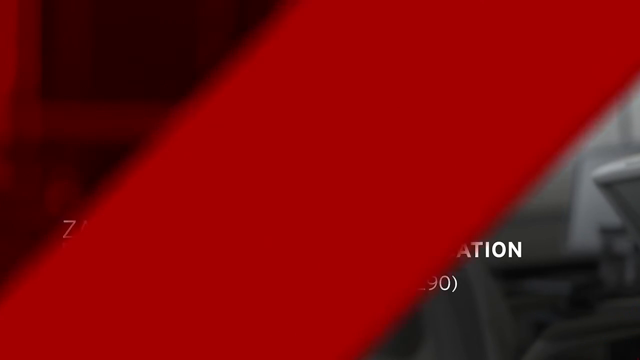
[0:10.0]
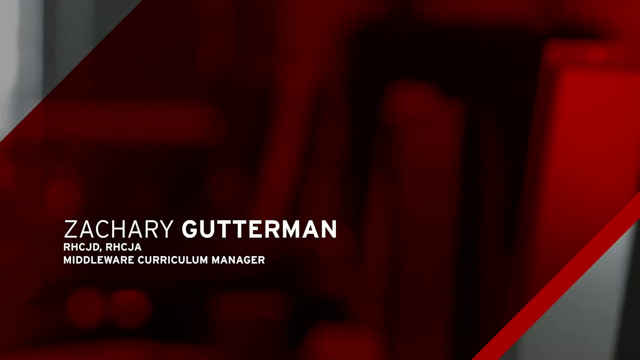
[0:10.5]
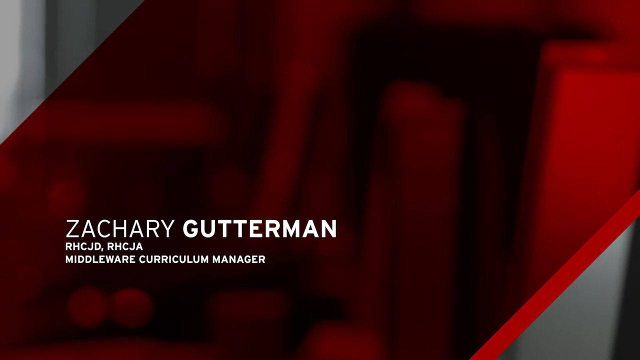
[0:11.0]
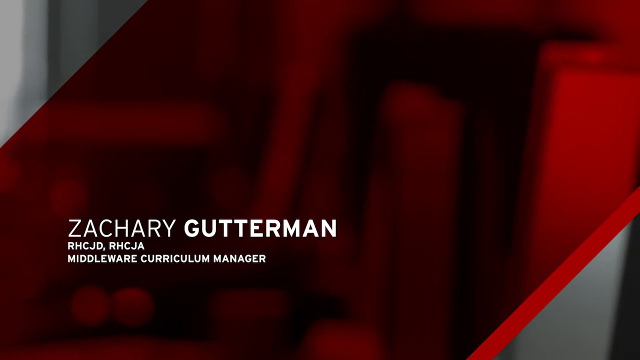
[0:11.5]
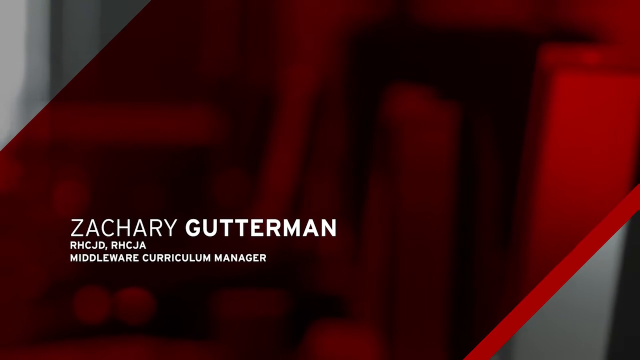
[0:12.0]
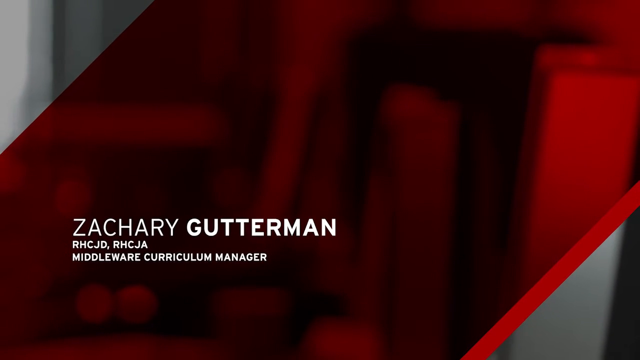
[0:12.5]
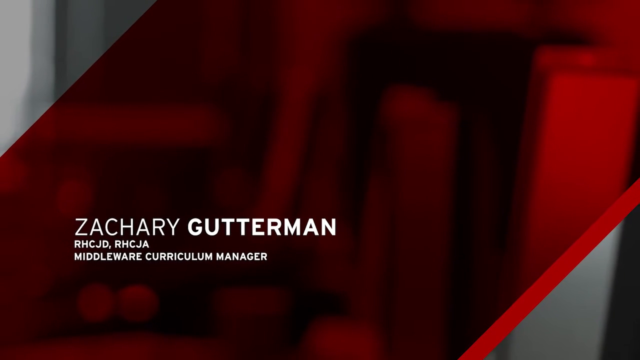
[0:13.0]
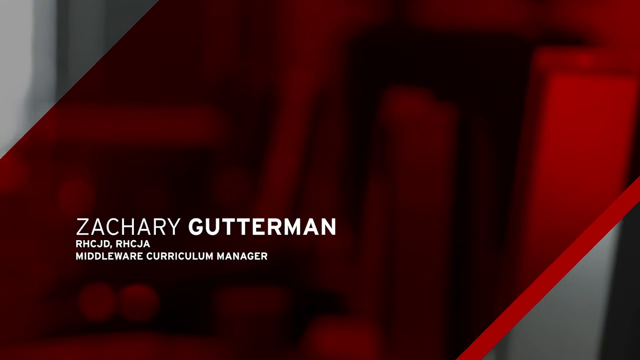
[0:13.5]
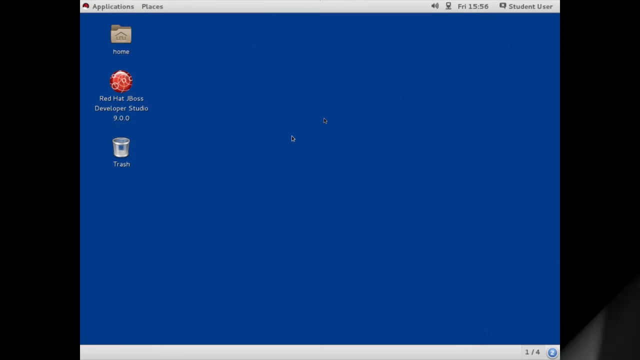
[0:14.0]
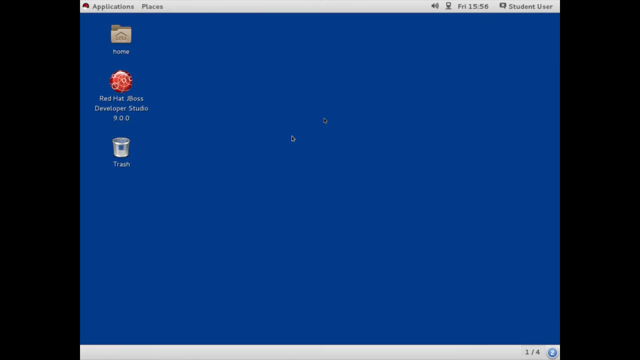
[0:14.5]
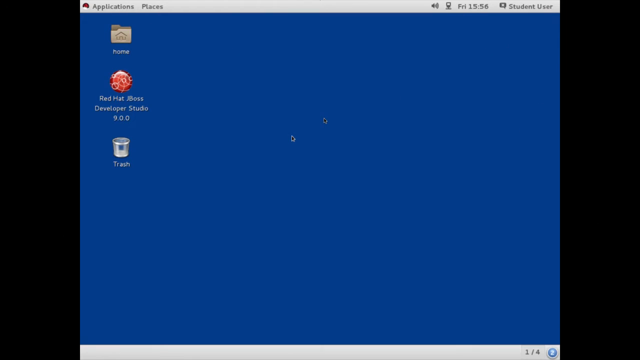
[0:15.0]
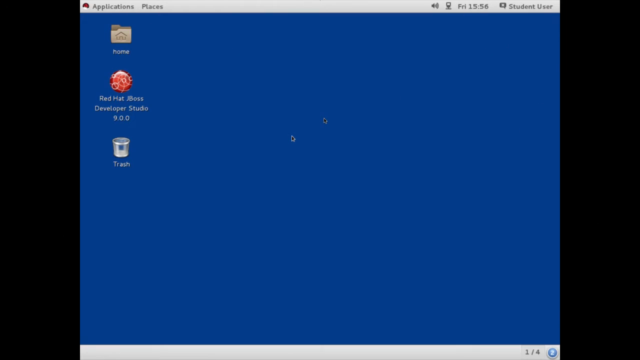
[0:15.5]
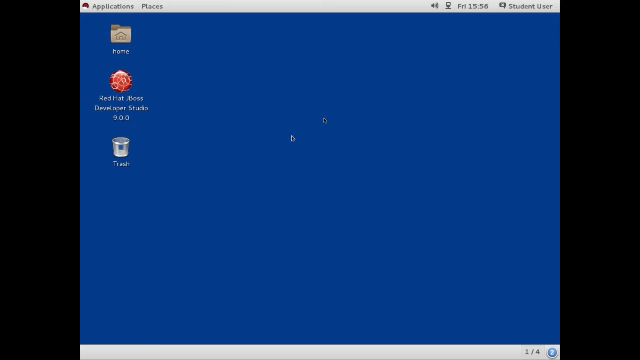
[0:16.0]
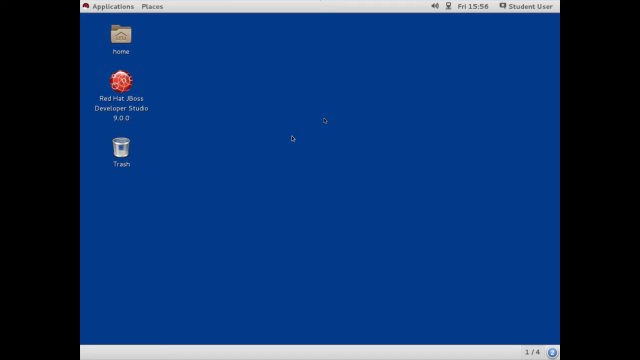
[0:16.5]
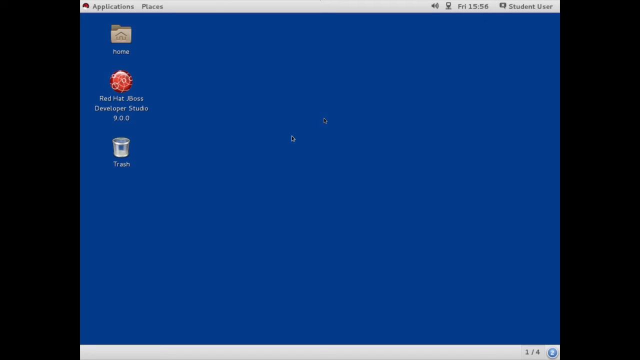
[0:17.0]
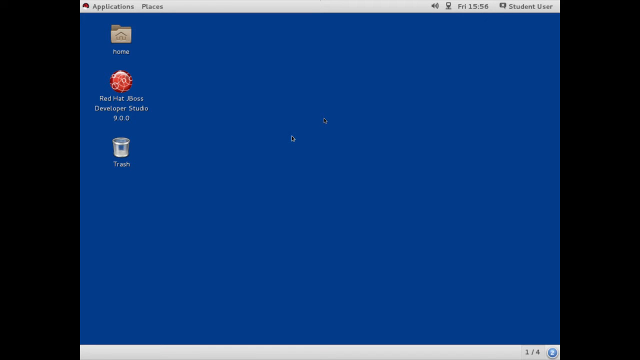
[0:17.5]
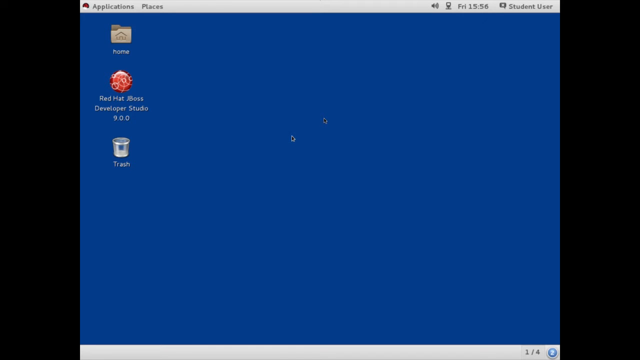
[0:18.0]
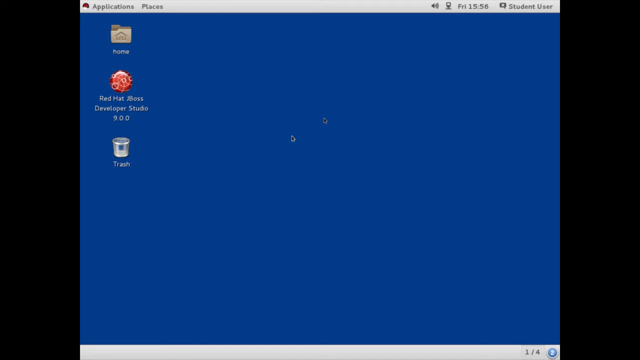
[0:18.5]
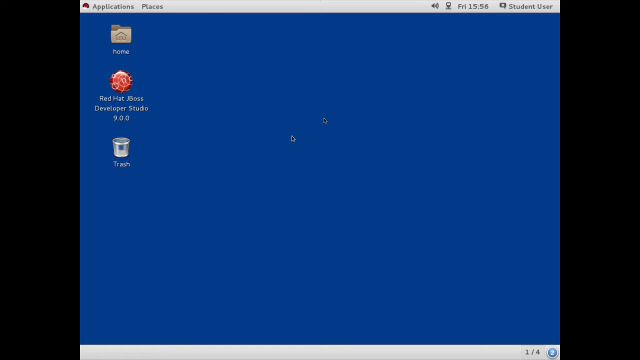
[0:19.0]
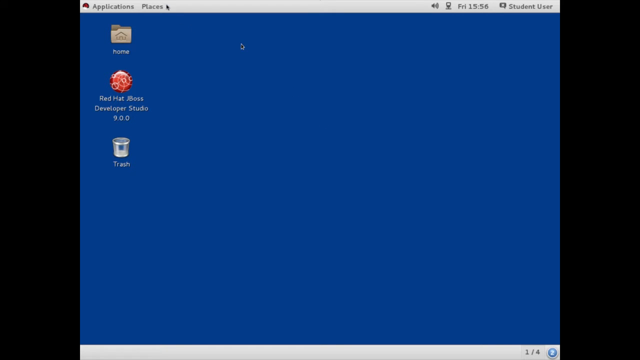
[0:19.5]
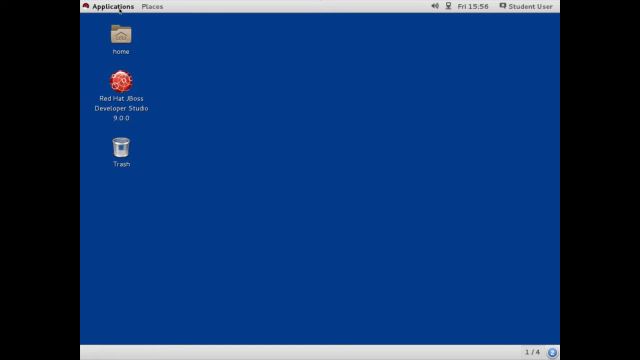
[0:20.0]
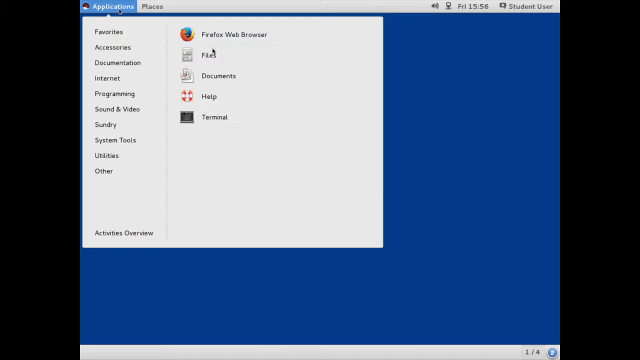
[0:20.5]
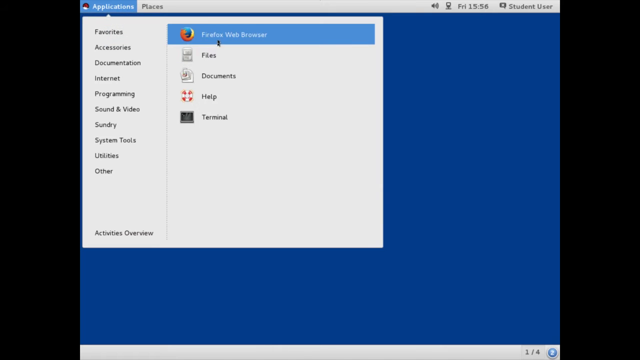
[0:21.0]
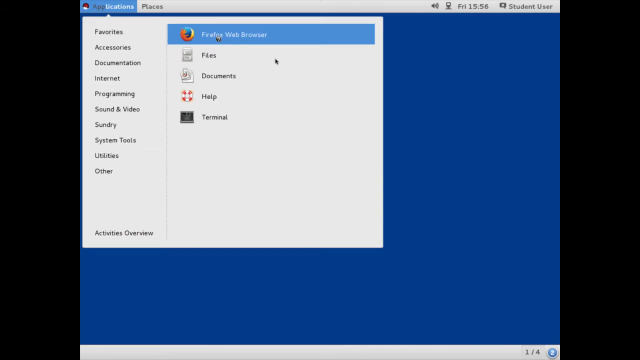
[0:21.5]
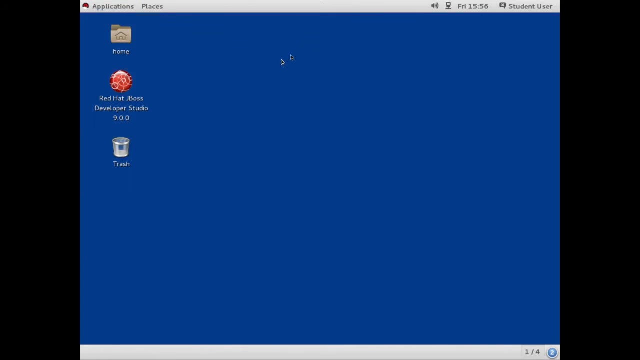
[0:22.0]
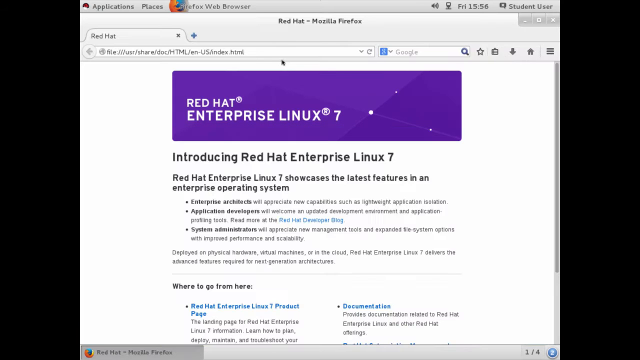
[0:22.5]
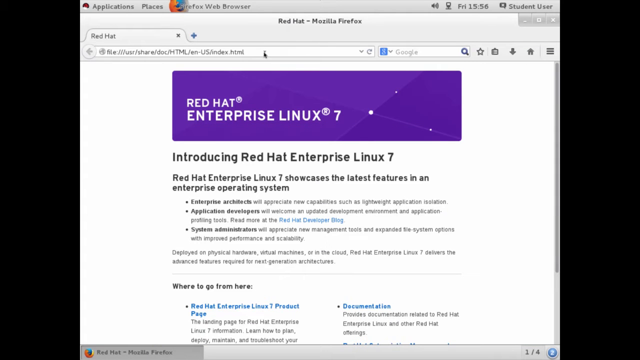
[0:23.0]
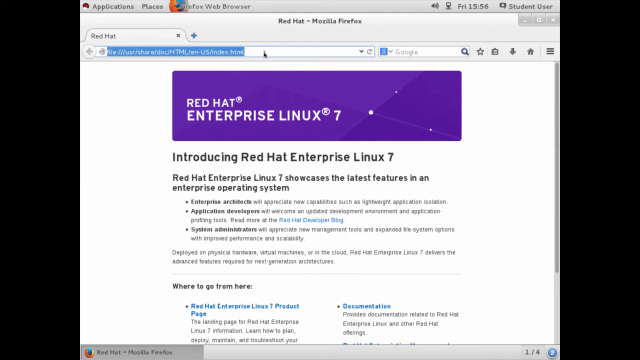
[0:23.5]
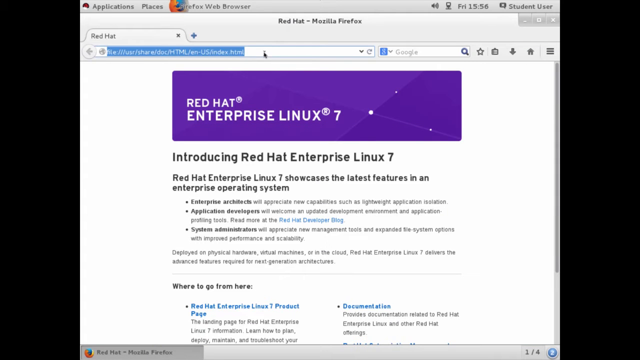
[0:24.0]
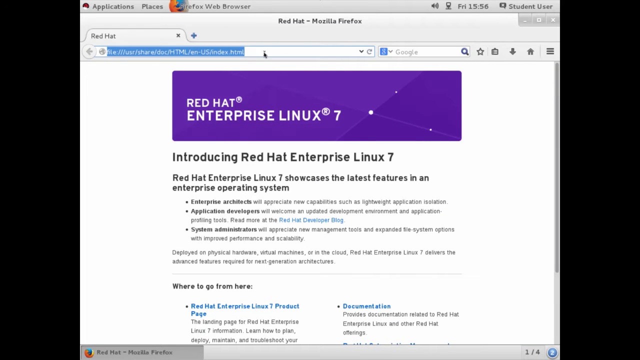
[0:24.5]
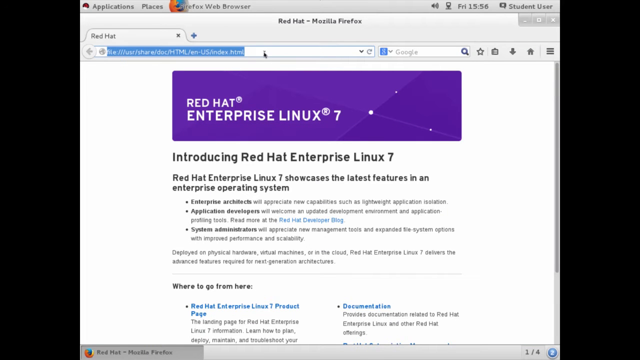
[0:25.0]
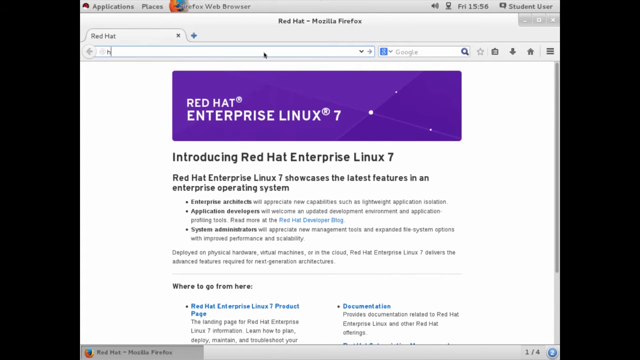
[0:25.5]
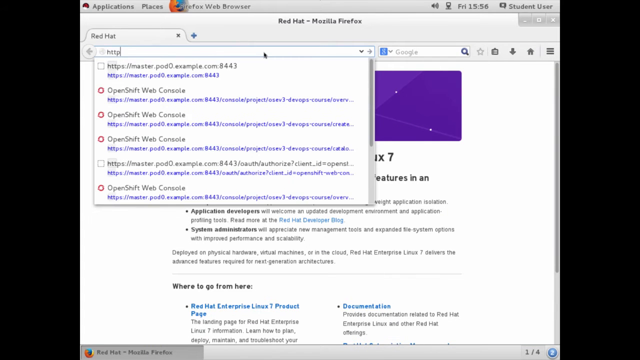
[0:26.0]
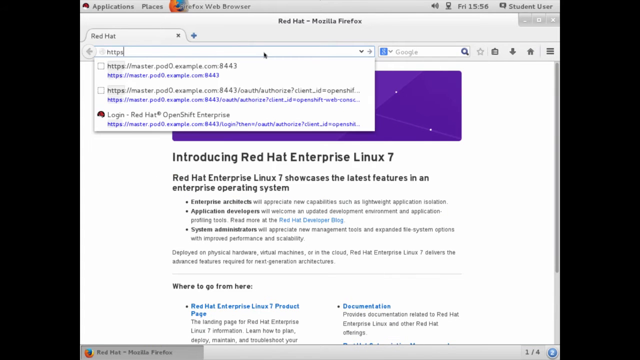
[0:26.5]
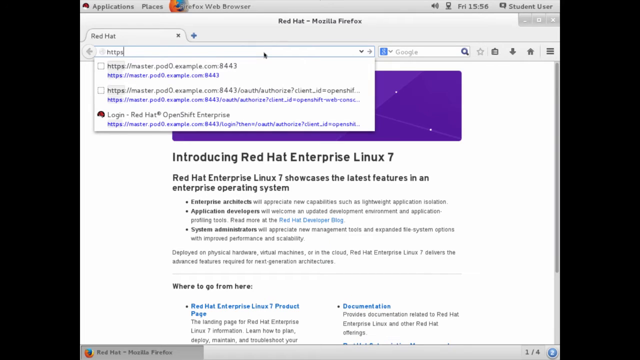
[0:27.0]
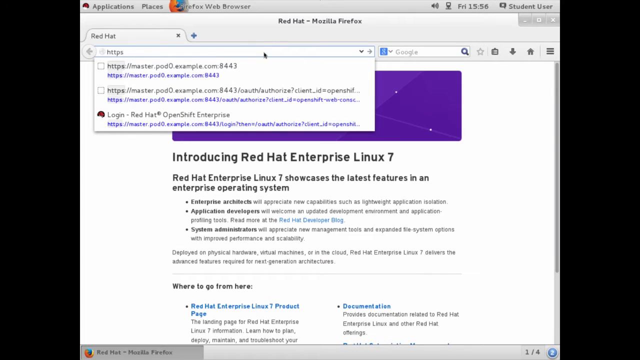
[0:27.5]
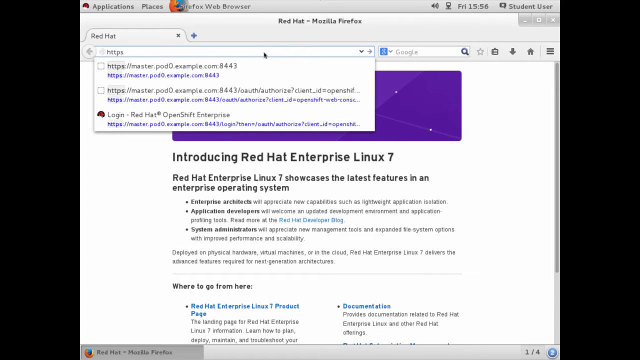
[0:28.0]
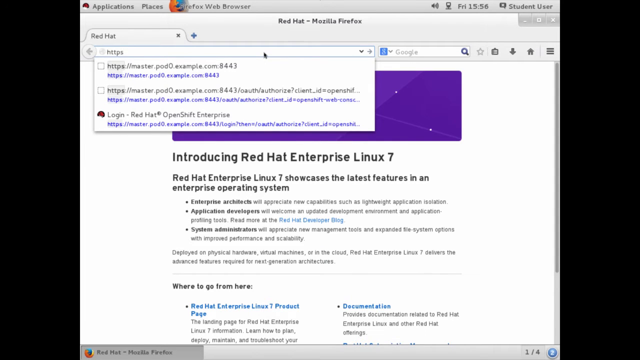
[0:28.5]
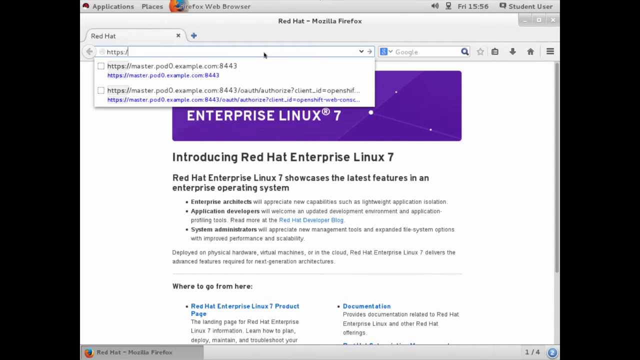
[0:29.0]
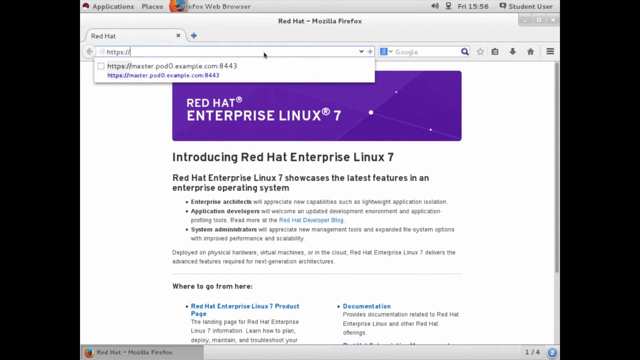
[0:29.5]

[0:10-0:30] A red transition screen sweeps from the top left corner toward the bottom right, and text appears that reads "Zachary Guterman, RHCJD, RHCJA, Middleware's Curriculum Manager." The video cuts to a screen recording of a computer with a solid blue background. Along the very top is the task manager, which reads "applications" and "places", and its top right corner shows the date "Friday", the time "1556" and the user "student". The only three shortcuts on the desktop are the home folder, a program named "Red Hat JBoss Developer Studio 9.0.0", and trash. A black cursor sits unmoving in the center of the blue background, then moves up toward the top left corner where the applications button is. The user clicks applications, which turns blue and opens a dropdown menu, quickly navigates to a shortcut that reads "Firefox Web Browser", which highlights in blue, and clicks it, opening the Firefox web browser.